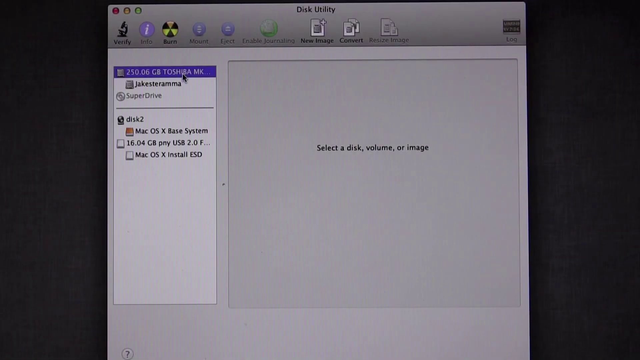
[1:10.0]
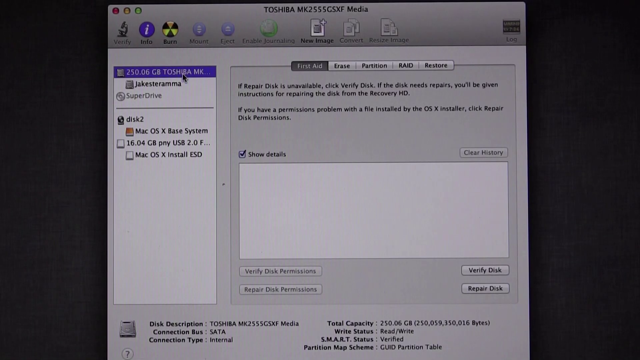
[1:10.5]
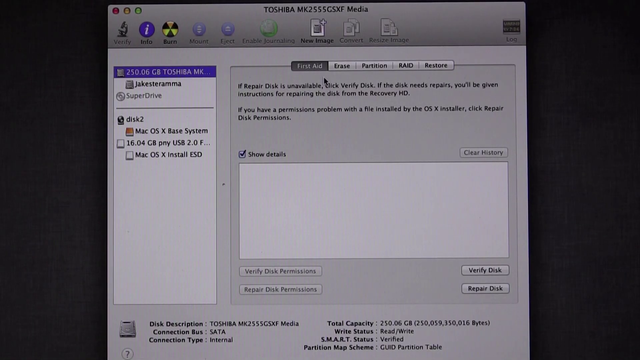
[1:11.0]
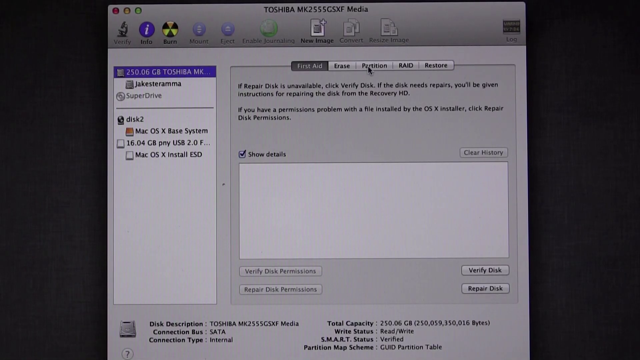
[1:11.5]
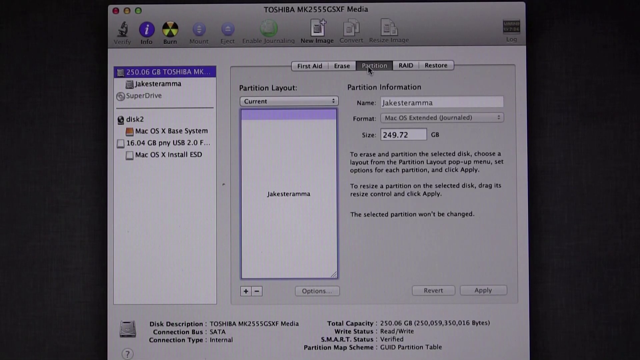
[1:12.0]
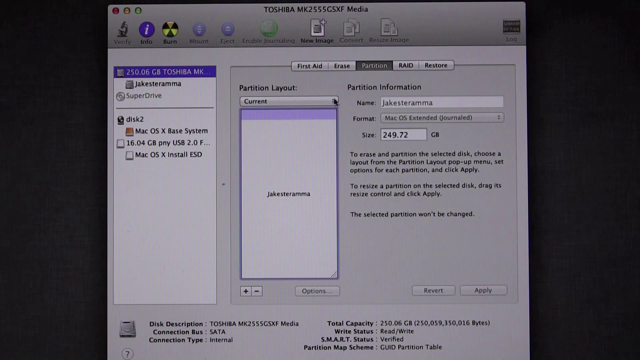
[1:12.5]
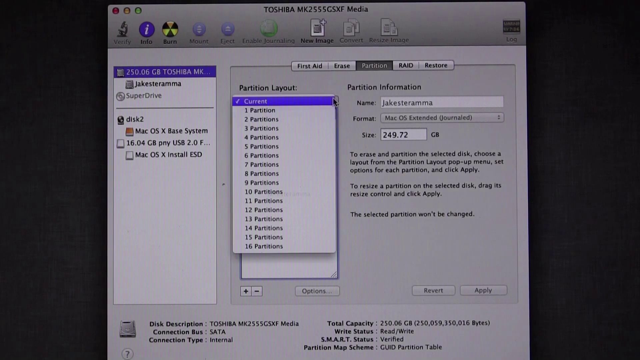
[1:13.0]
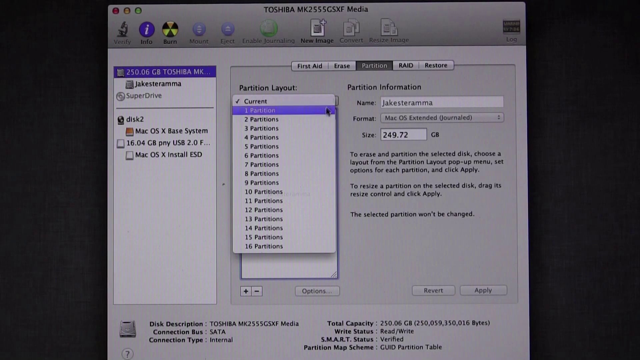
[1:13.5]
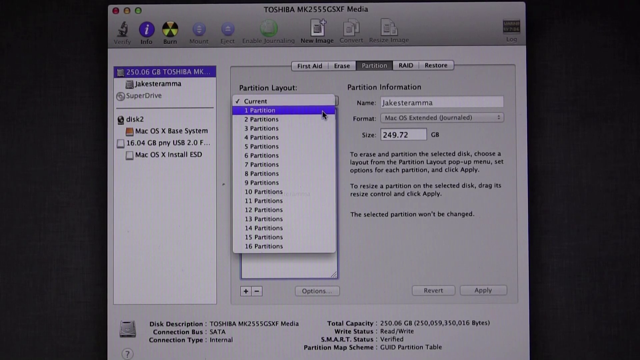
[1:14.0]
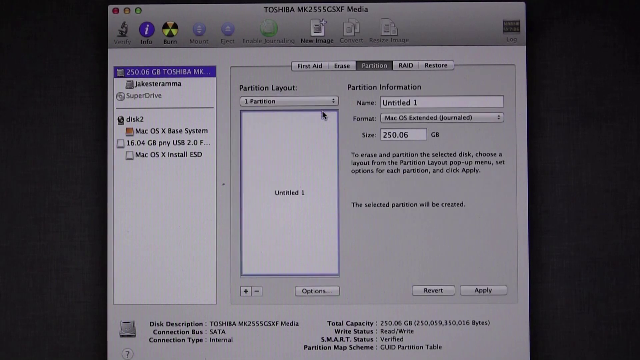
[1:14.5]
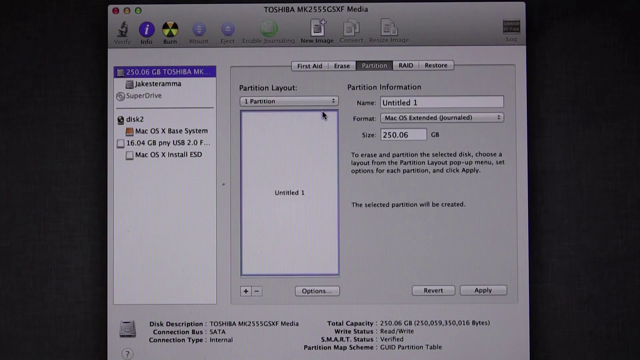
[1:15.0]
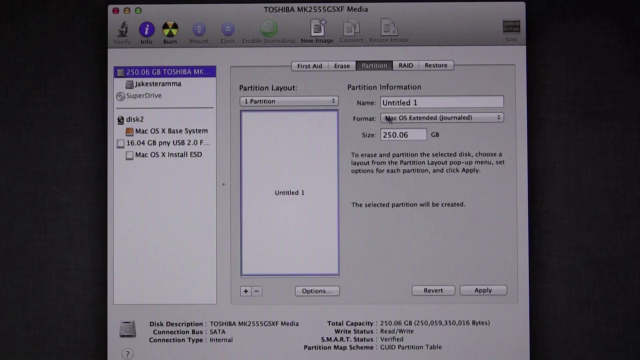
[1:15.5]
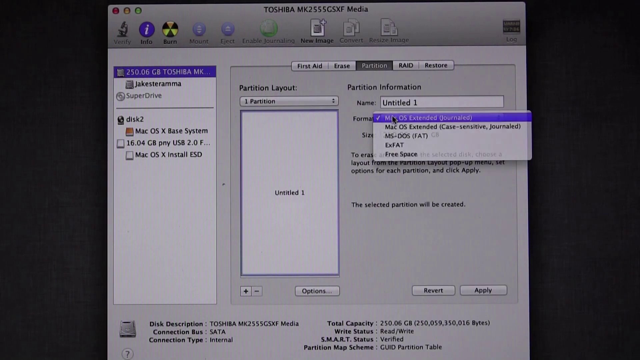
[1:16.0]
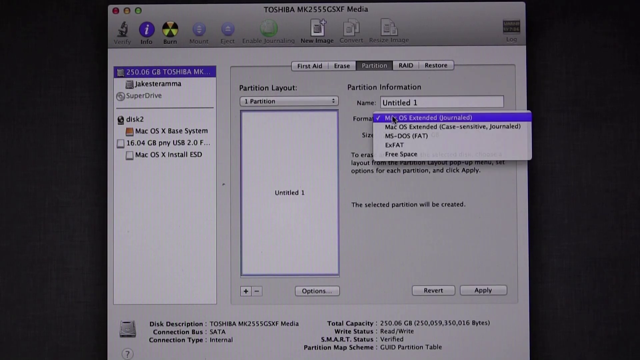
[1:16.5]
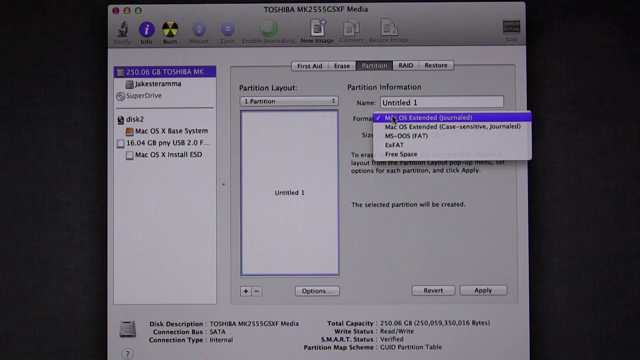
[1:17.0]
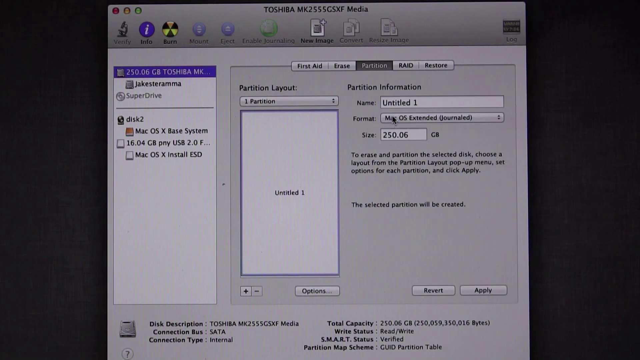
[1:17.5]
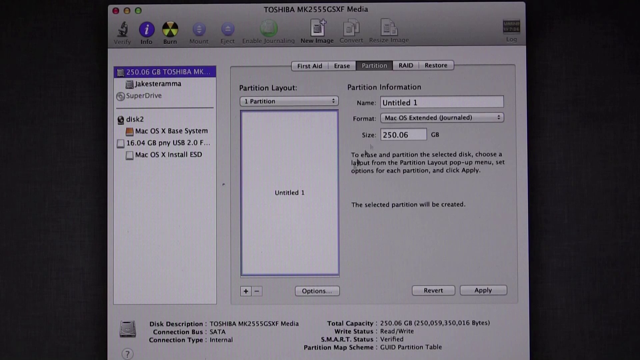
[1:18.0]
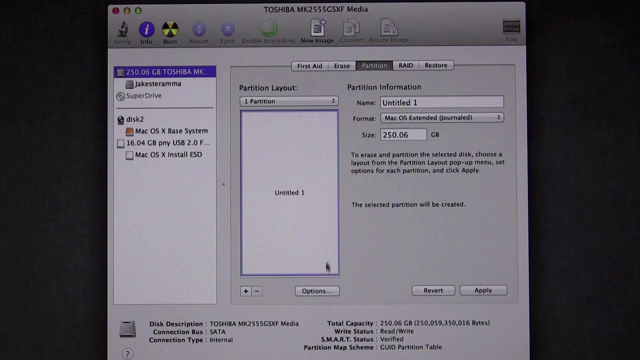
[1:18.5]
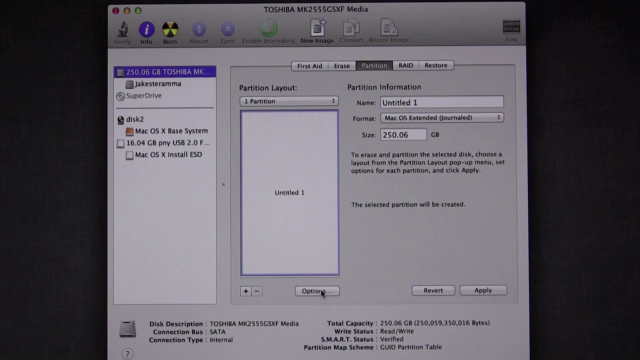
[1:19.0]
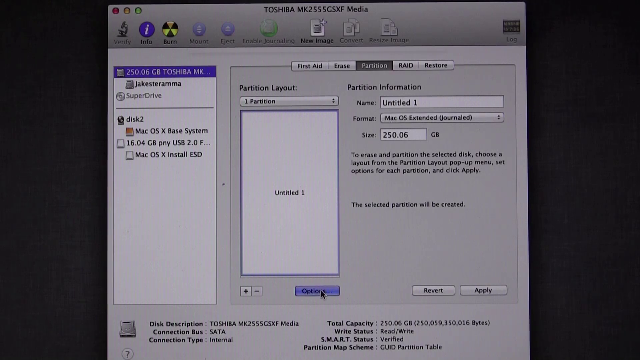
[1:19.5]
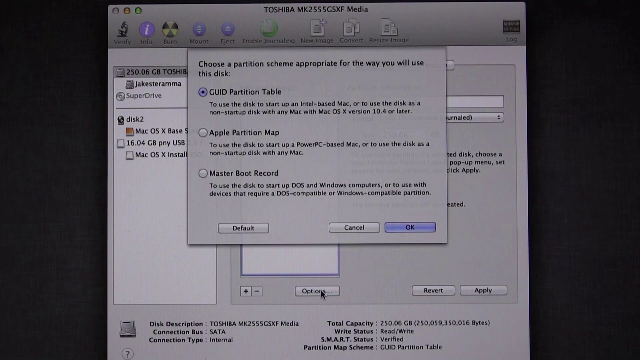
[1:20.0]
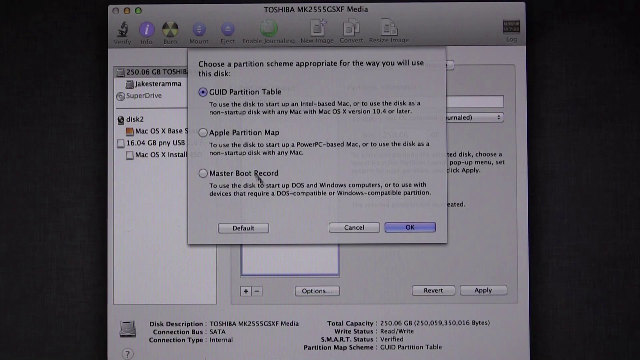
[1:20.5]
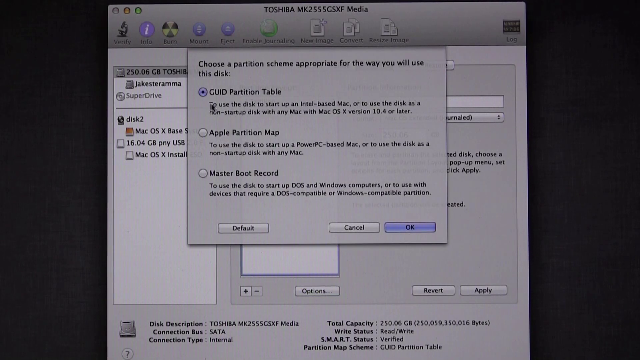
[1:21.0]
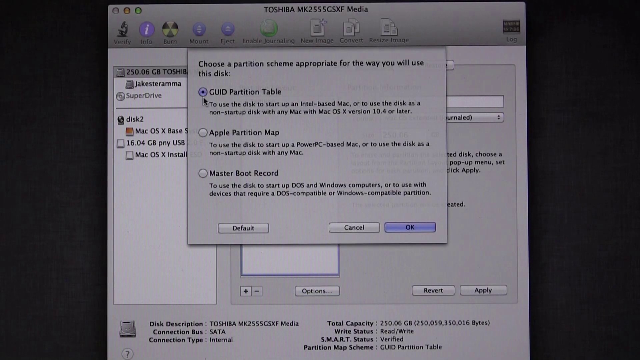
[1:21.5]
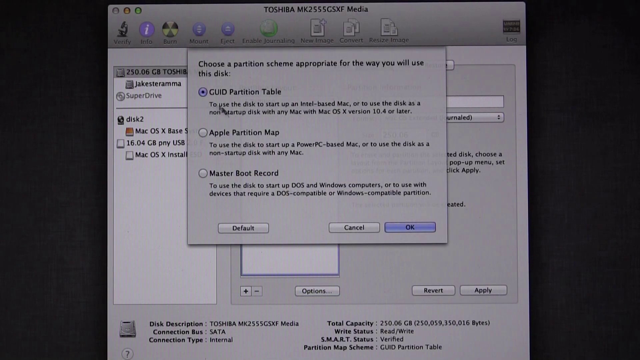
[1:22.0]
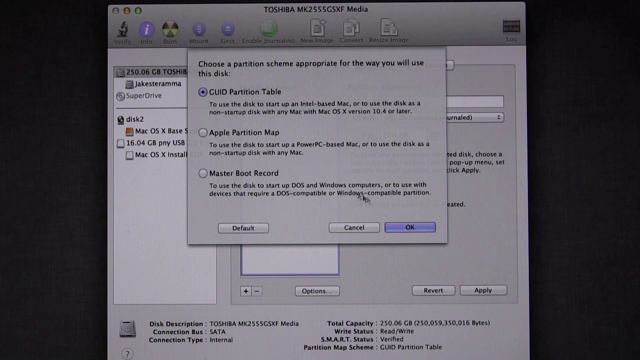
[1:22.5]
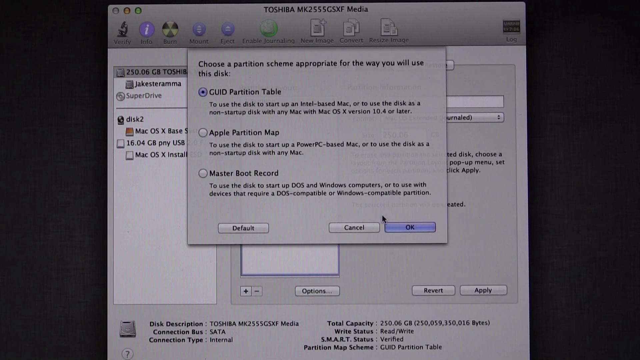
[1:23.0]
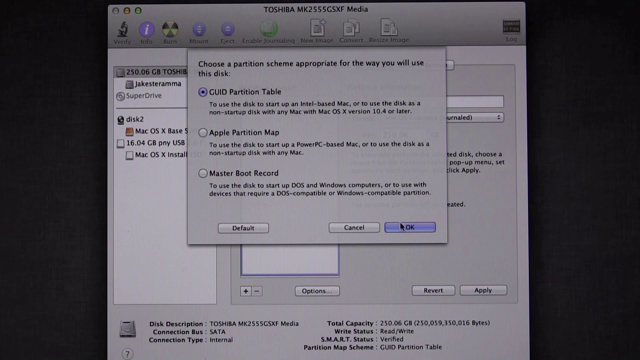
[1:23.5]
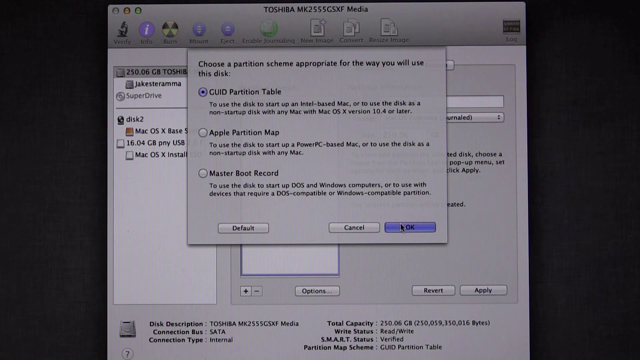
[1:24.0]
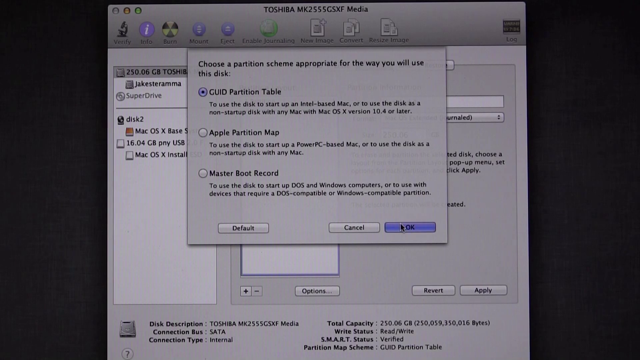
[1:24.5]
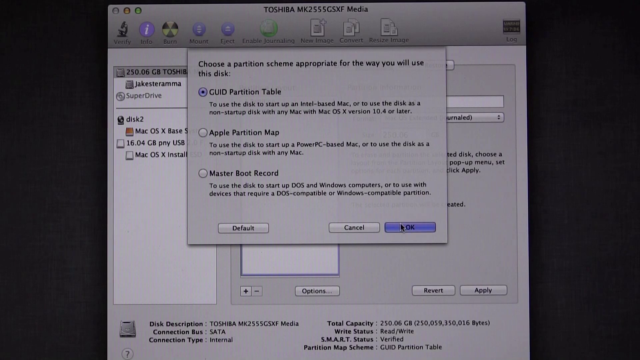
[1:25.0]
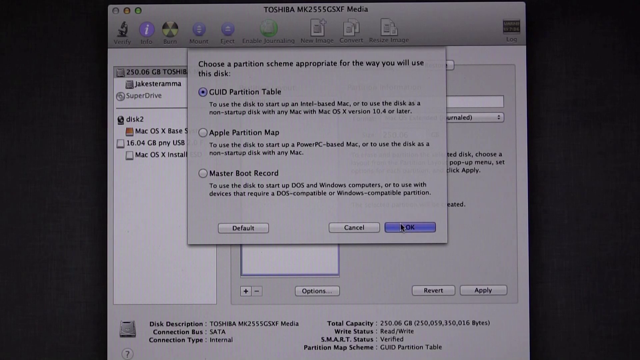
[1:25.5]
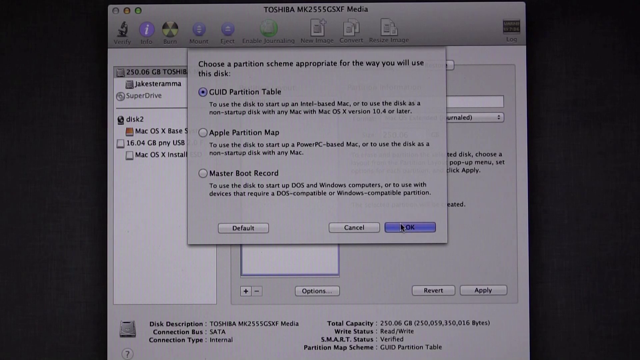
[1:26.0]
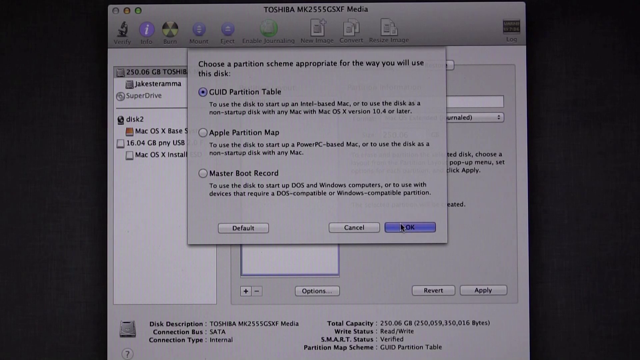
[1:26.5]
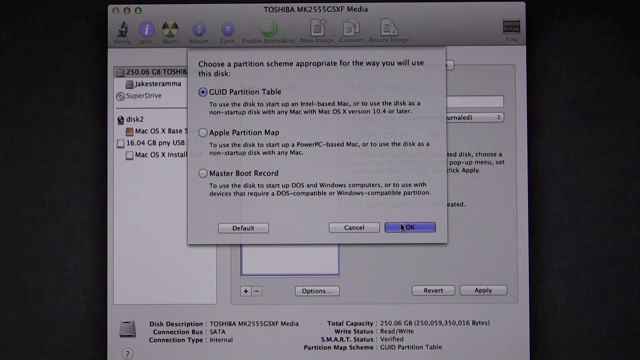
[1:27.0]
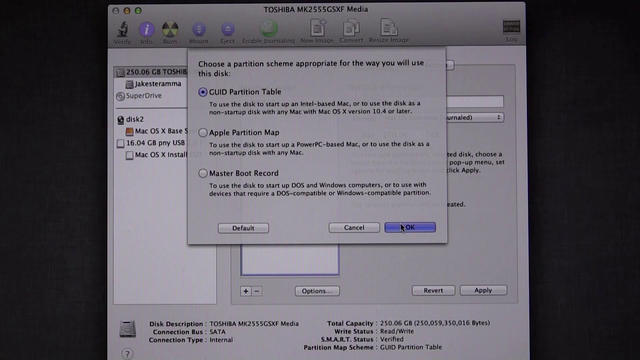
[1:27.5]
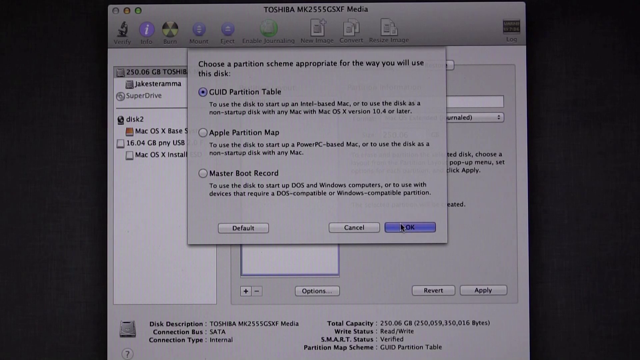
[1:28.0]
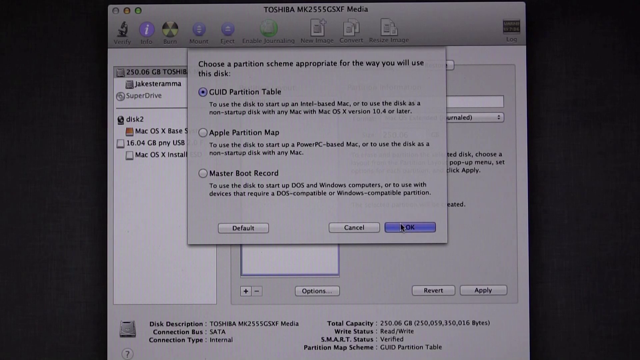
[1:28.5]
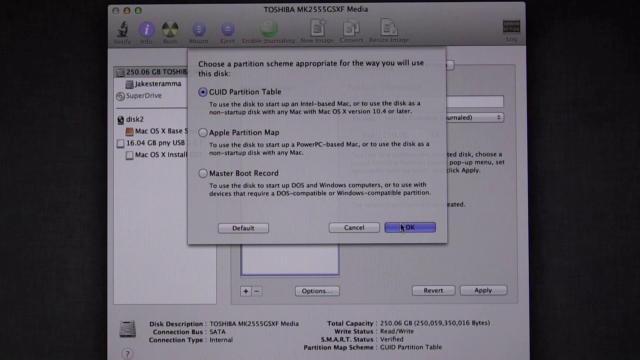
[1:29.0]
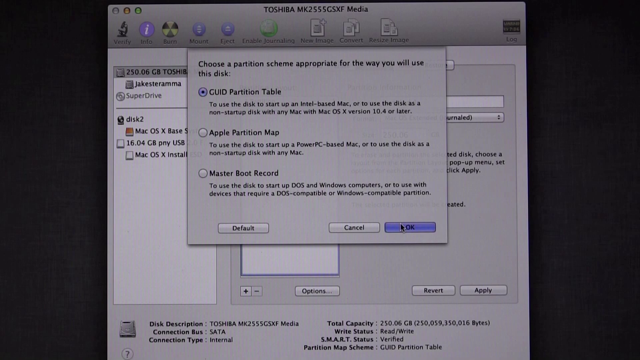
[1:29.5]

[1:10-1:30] The person clicks at the top on the item that says "250.06GB Toshiba MK," which loads another part of the screen. They click on partition, then in the screen that pops up they scroll down and click the first option, "one partition." They click to the right and click the top icon, which says "the Mac." They keep clicking through options, and the last one selected is "guide partition table," after which they push OK.